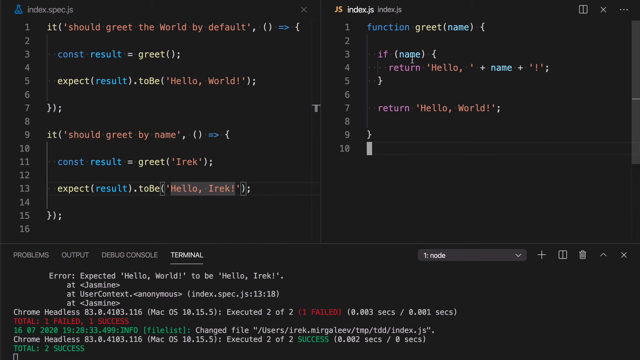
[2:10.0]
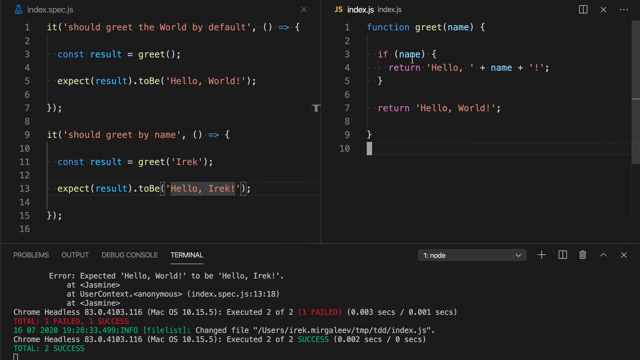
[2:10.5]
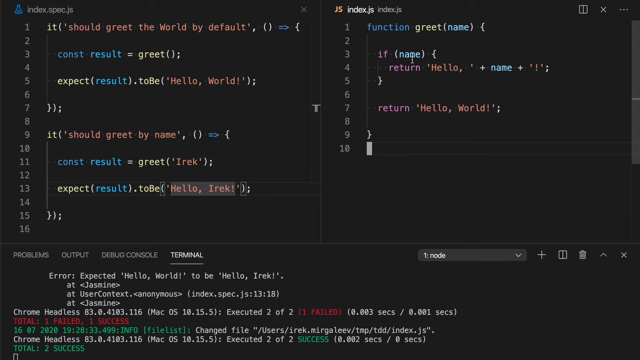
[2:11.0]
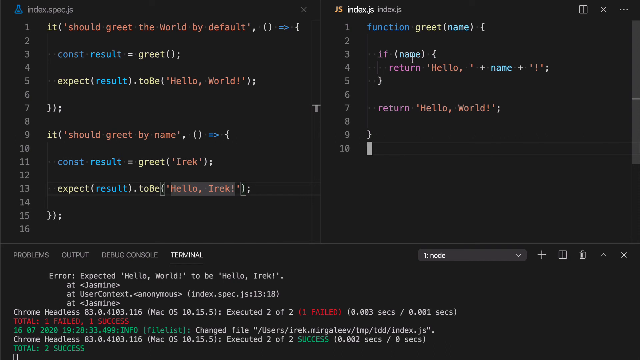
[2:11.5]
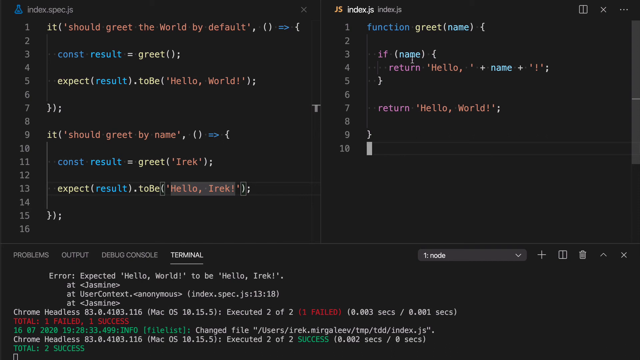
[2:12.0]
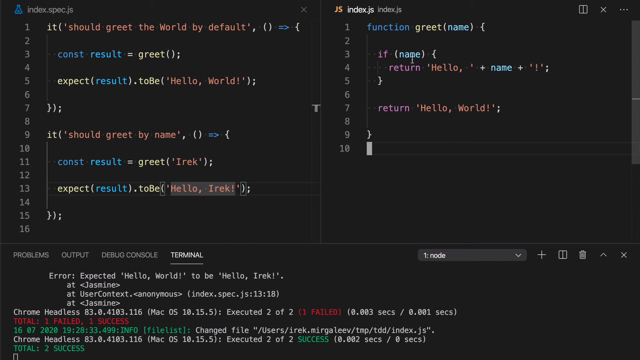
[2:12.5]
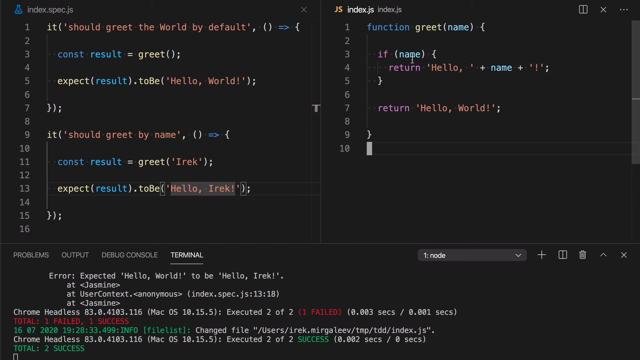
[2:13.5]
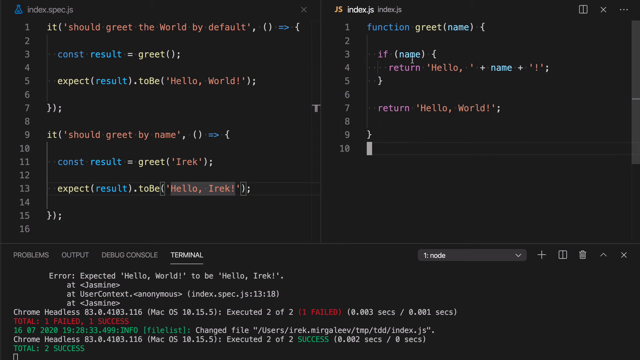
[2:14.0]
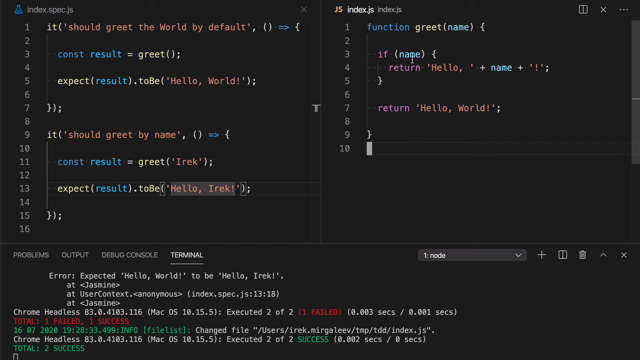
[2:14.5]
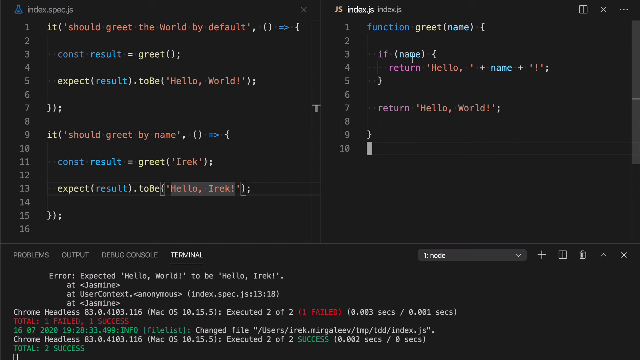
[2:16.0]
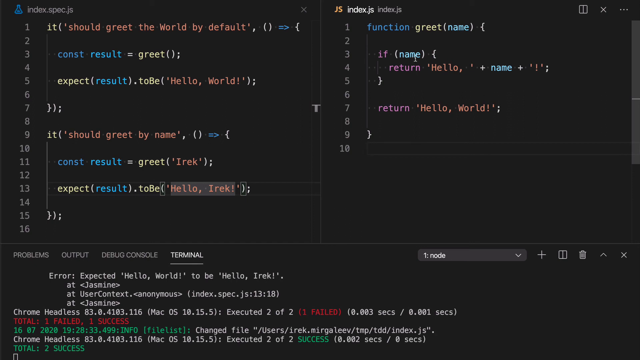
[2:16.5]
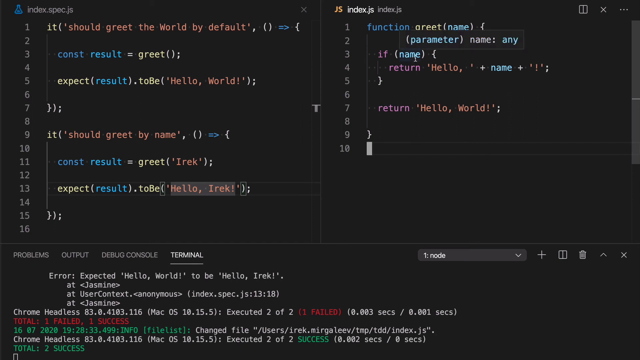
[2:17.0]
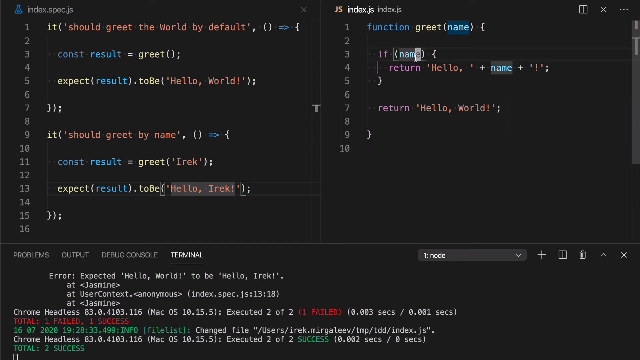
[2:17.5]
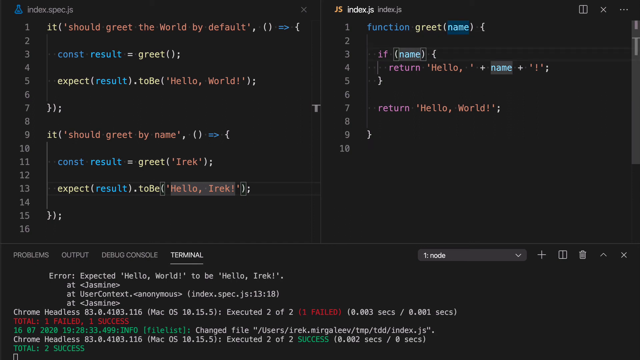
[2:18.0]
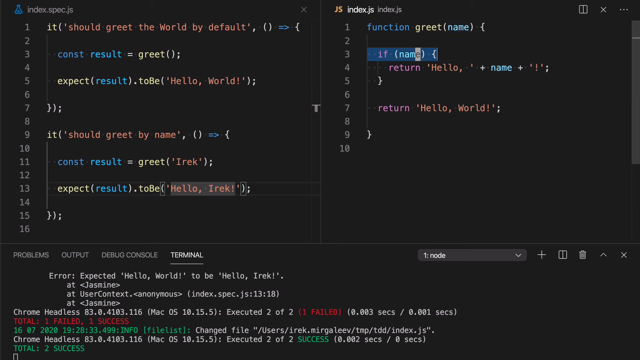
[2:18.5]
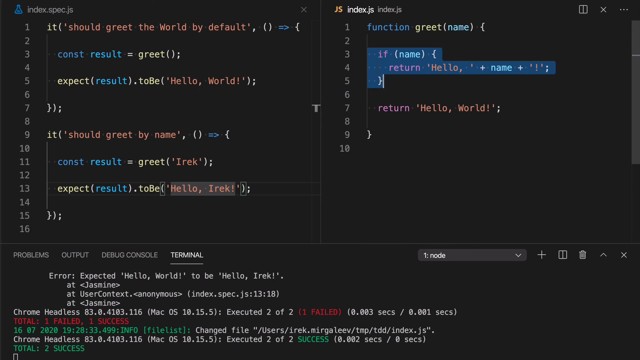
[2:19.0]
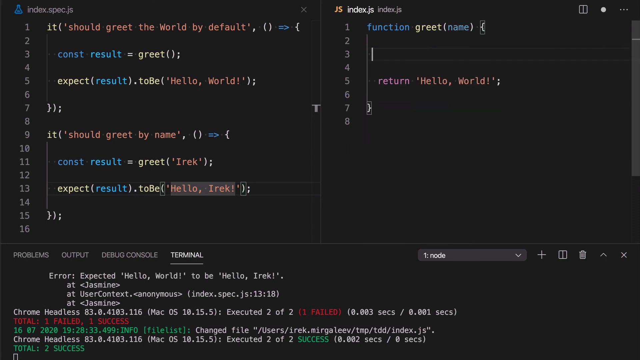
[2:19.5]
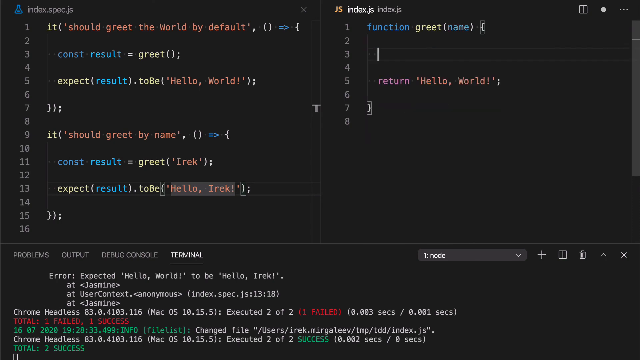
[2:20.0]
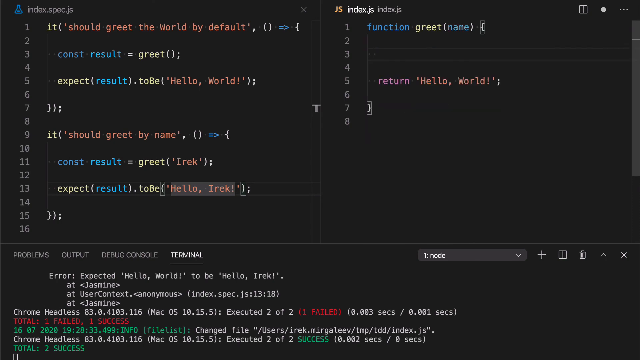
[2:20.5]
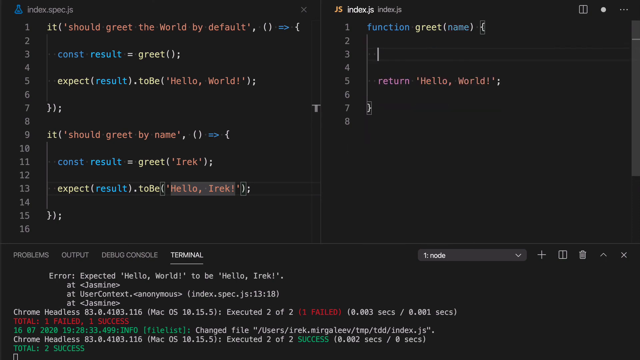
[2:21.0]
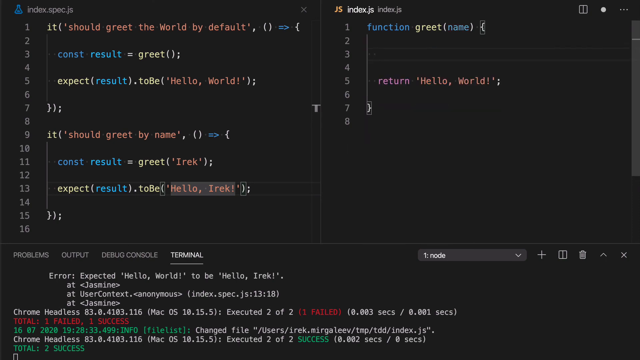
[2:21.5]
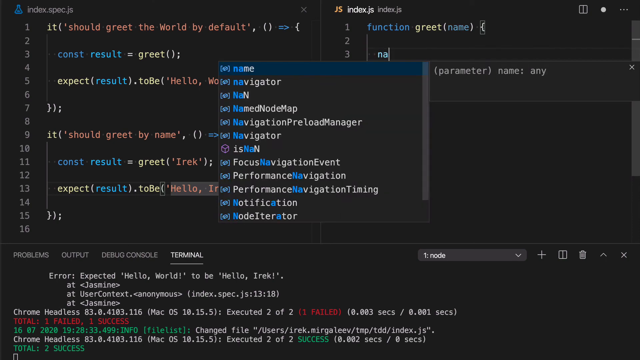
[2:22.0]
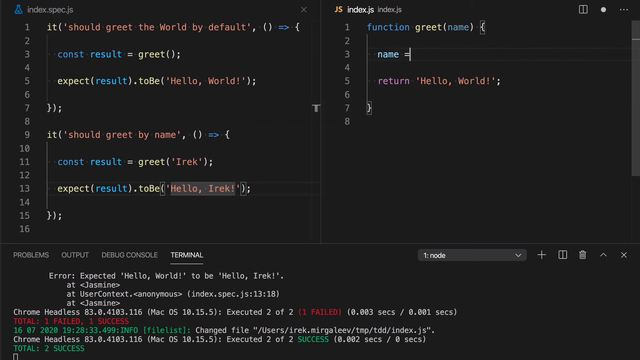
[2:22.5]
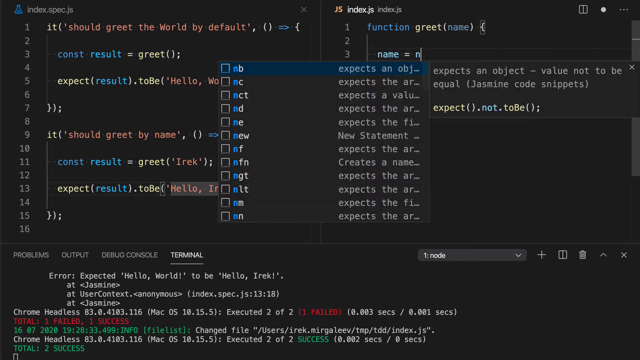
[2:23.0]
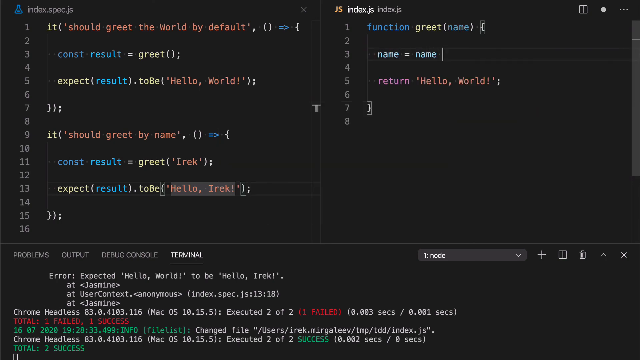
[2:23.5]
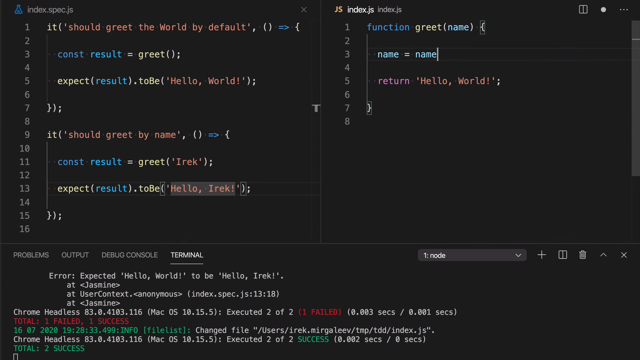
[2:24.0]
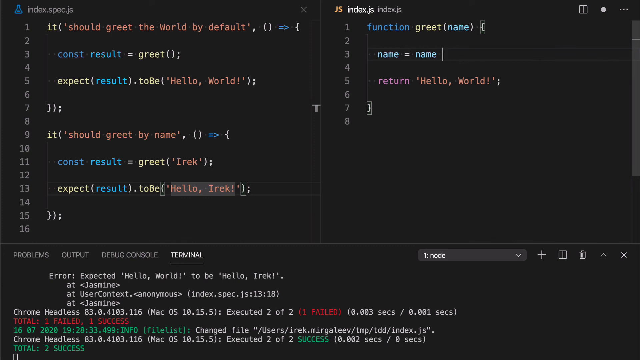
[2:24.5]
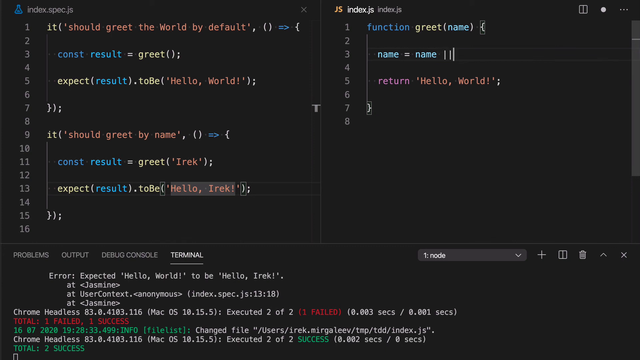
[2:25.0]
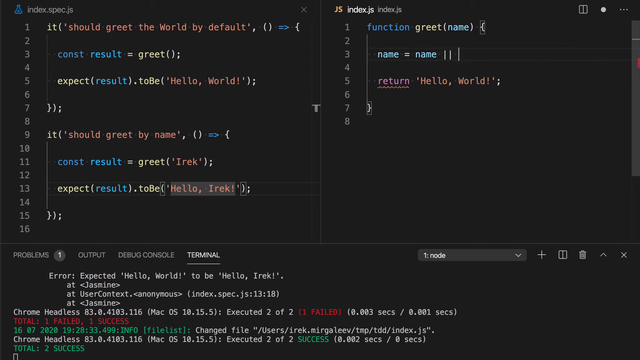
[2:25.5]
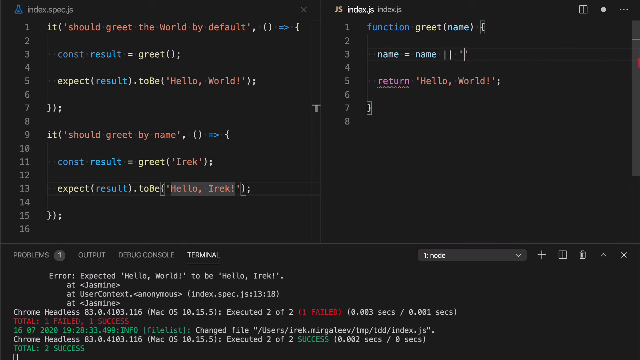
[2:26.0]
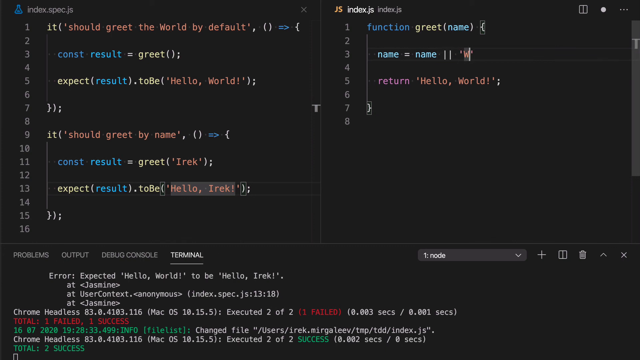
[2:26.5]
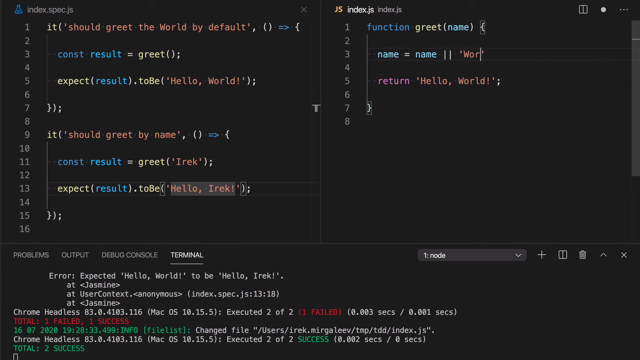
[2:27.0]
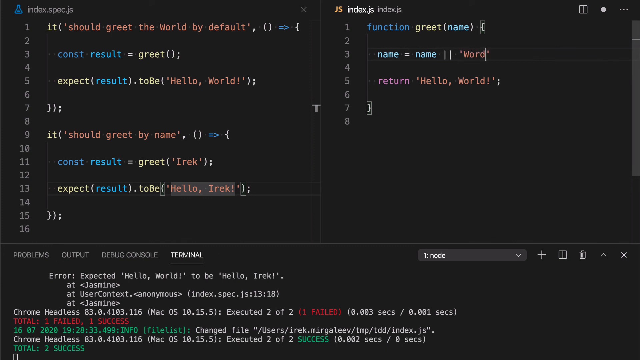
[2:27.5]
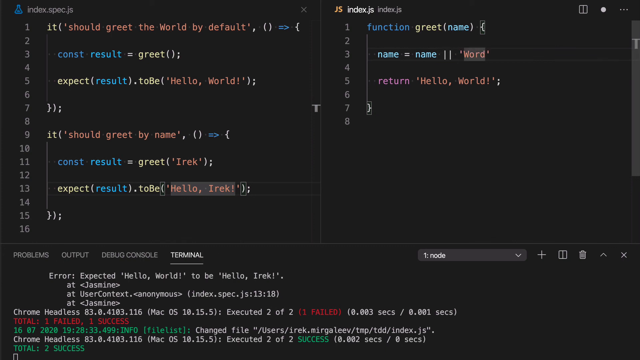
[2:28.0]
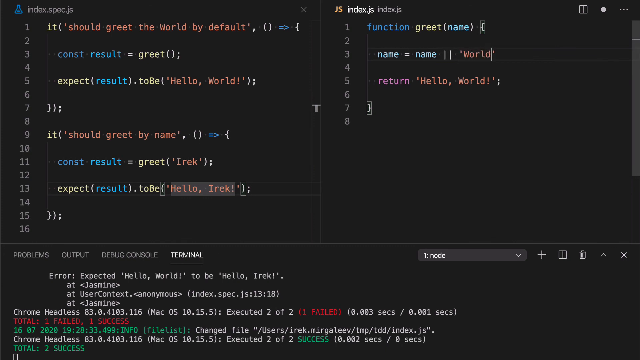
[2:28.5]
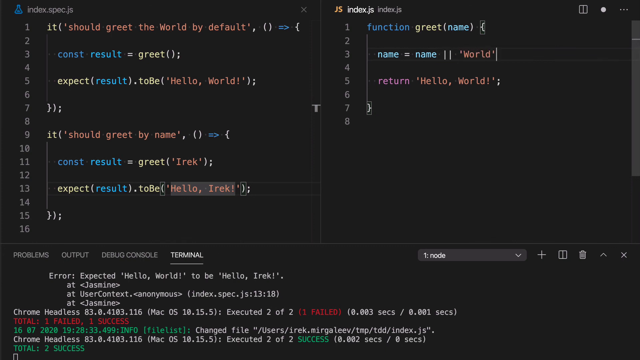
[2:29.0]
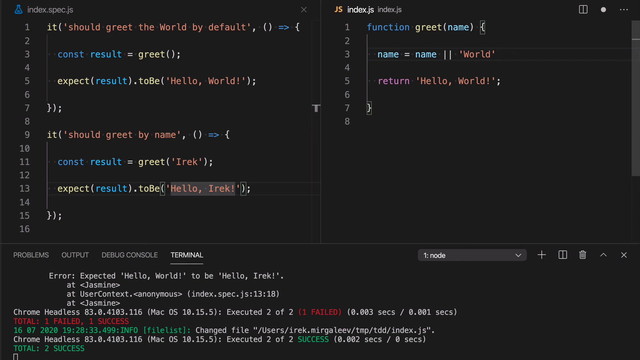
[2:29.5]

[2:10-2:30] On the black screen, the person has typed "should greet the world by default", along with "construction result", "greet", "hello world" and "should greet by name". The words appear in different colors with many different punctuation marks. "terminal" is underlined, while "debug", "output" and "problems" are not. The person highlights and types in more text.